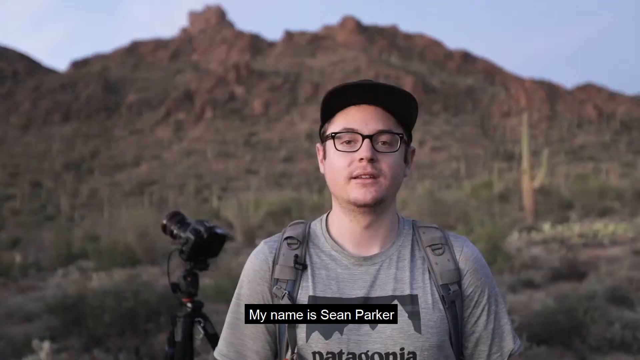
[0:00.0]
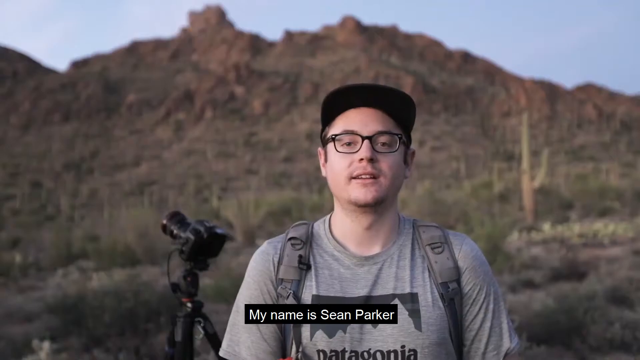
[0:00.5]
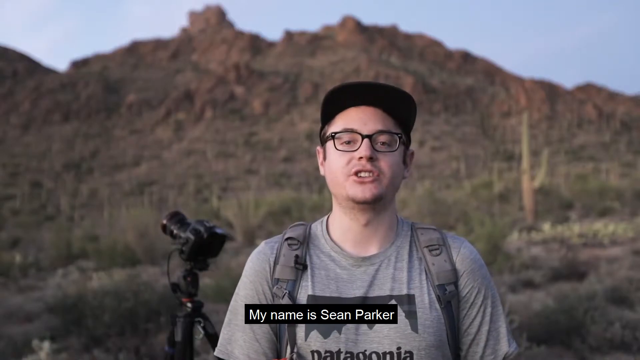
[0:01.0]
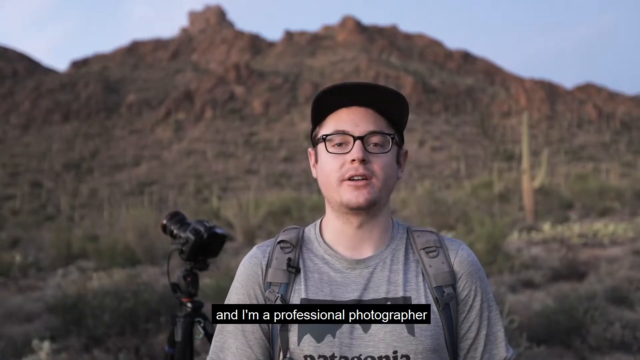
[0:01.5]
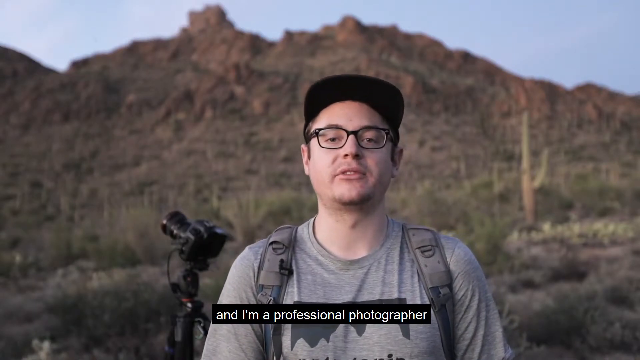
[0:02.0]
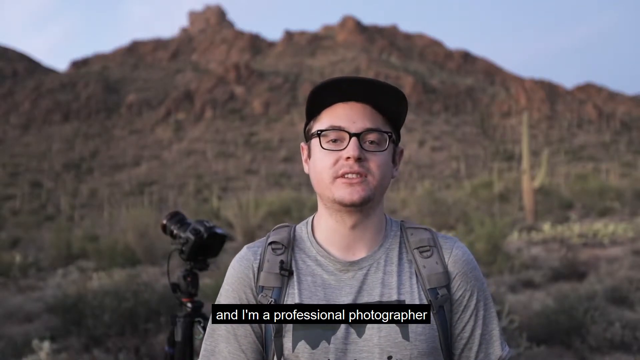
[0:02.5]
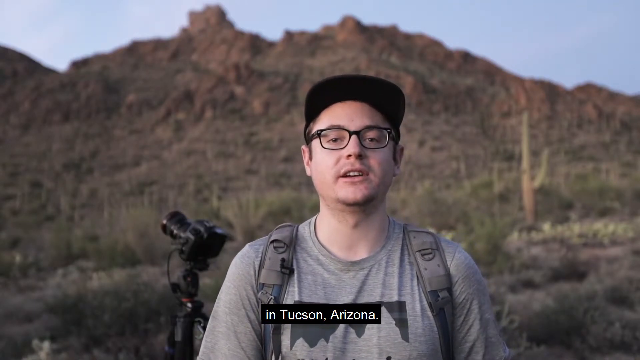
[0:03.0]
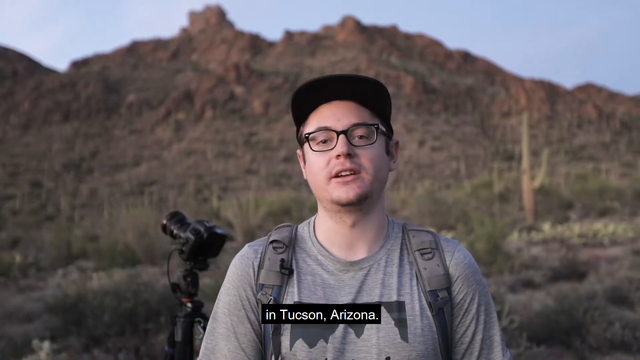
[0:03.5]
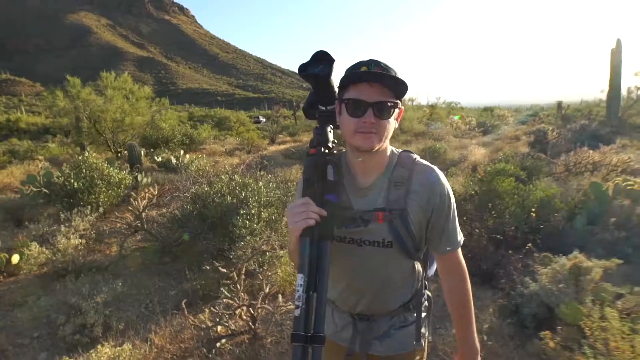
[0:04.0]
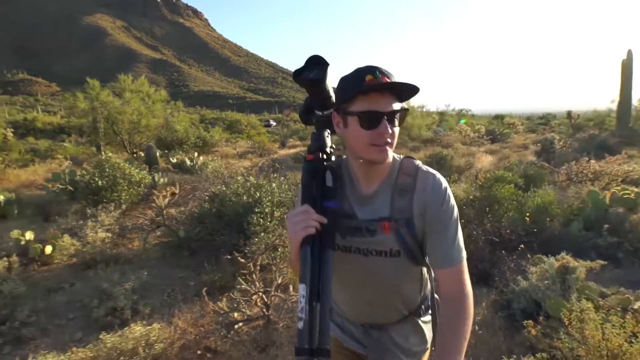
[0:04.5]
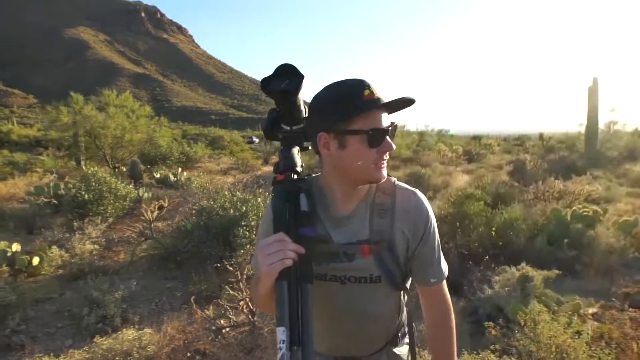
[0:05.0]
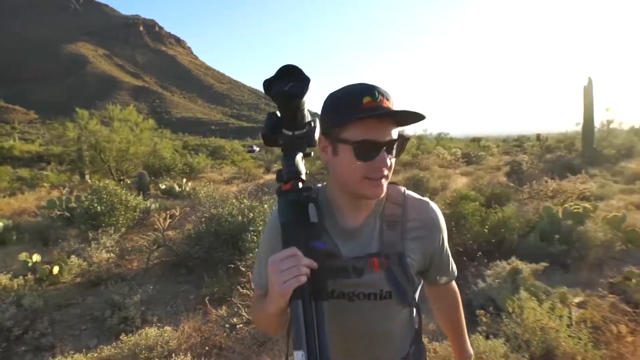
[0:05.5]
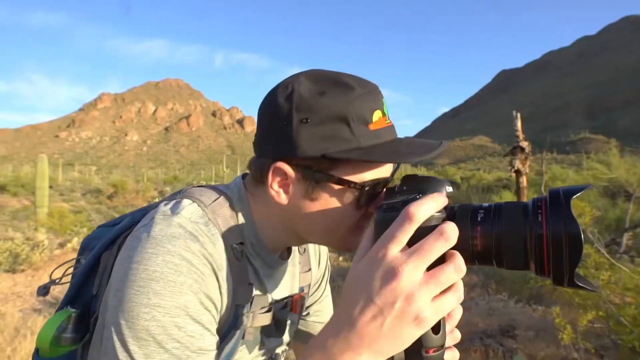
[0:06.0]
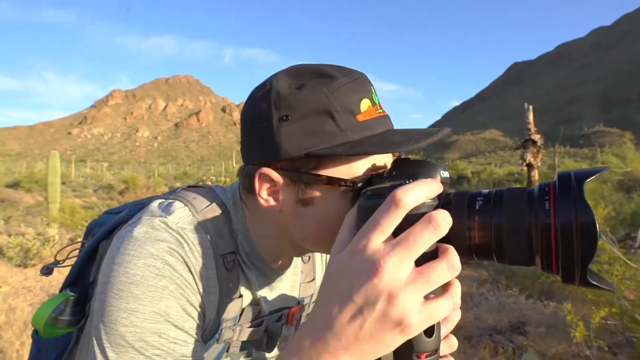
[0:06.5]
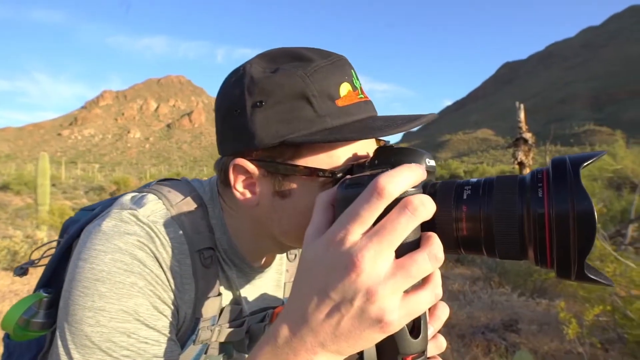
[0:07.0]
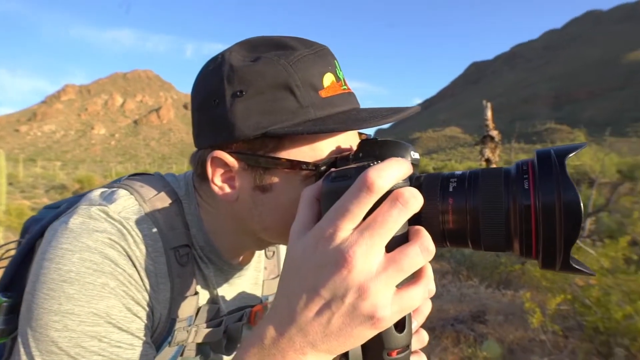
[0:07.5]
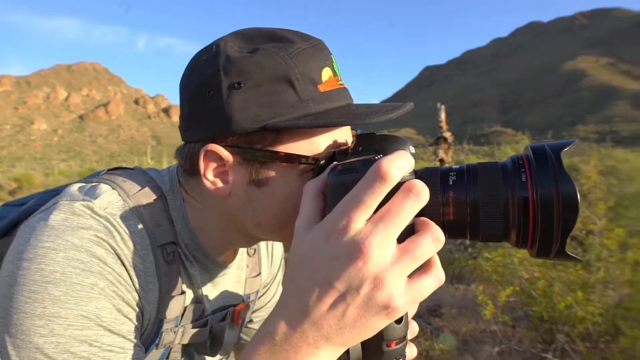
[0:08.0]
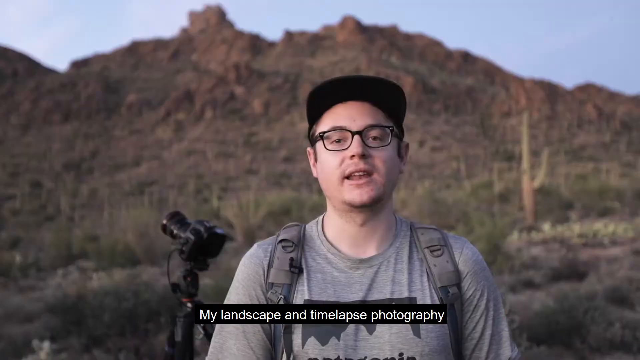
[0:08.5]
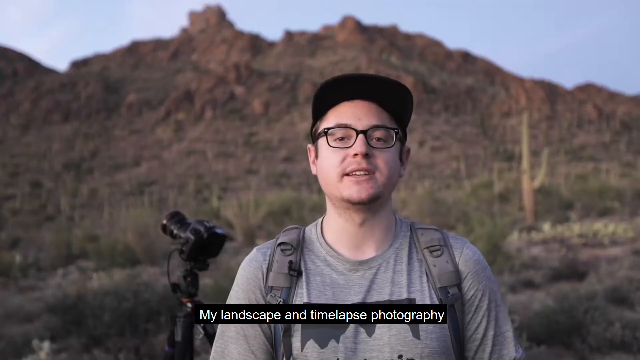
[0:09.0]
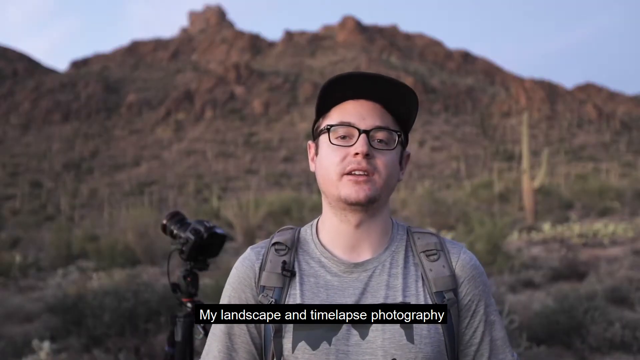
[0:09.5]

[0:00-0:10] The background shows mountains with a little vegetation, not much of it, and at the back there is a camera mounted on a tripod, pointing up. A man wearing glasses, a black cap and a grey t-shirt appears; according to the subtitles, he says he is Sean Parker, a professional photographer from Tucson Arizona. He then walks through the fields and is seen taking pictures, saying that his landscape and time-lapse photography has taken him all over the world.